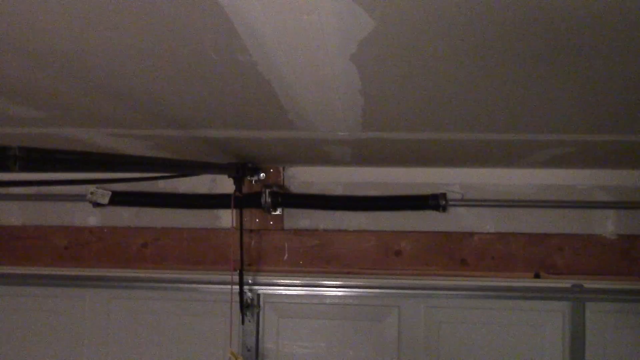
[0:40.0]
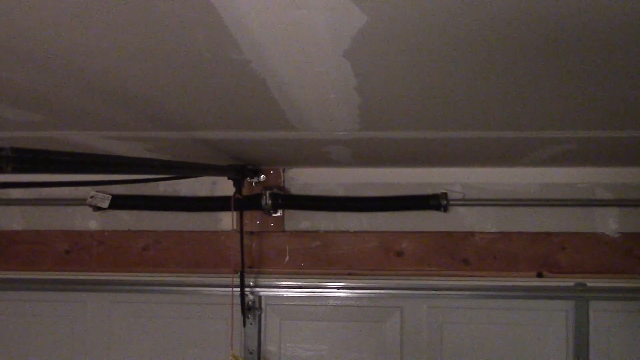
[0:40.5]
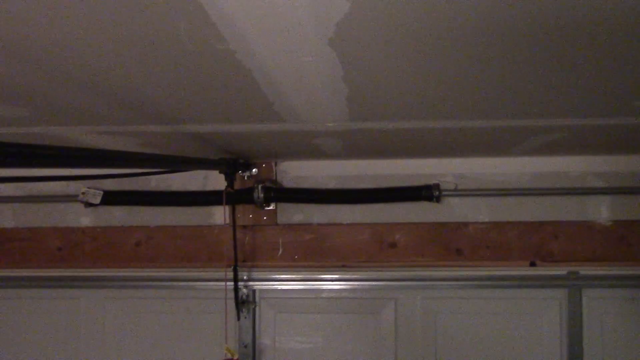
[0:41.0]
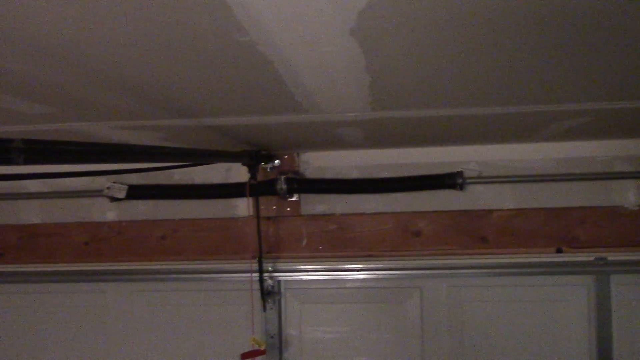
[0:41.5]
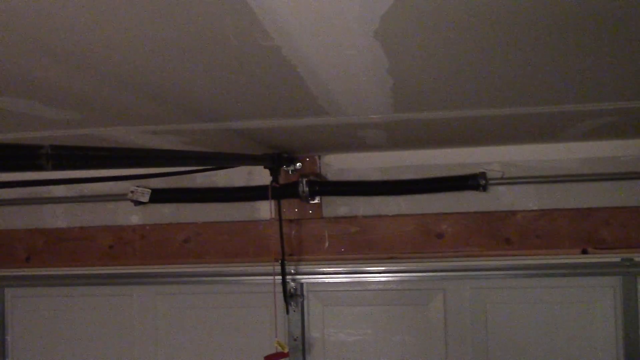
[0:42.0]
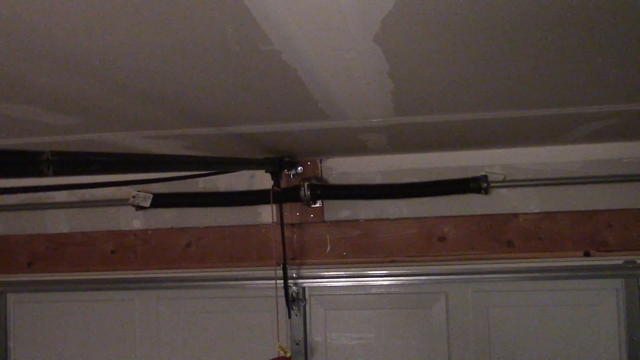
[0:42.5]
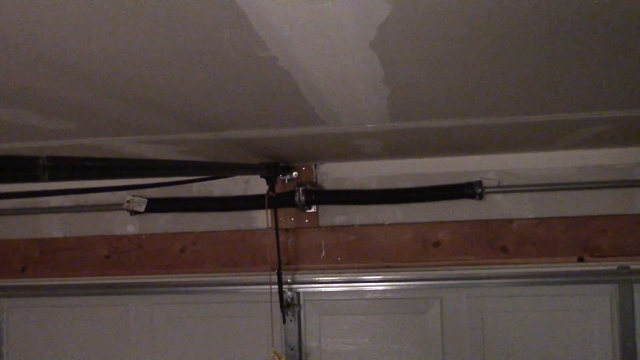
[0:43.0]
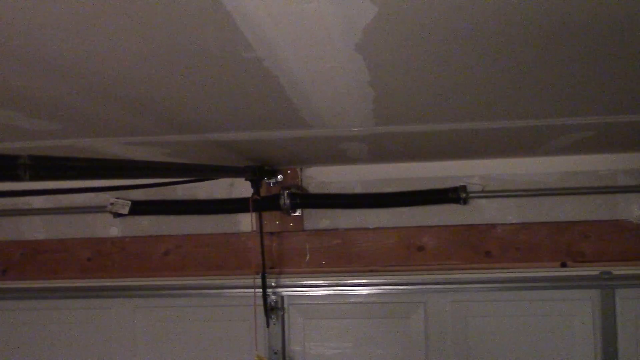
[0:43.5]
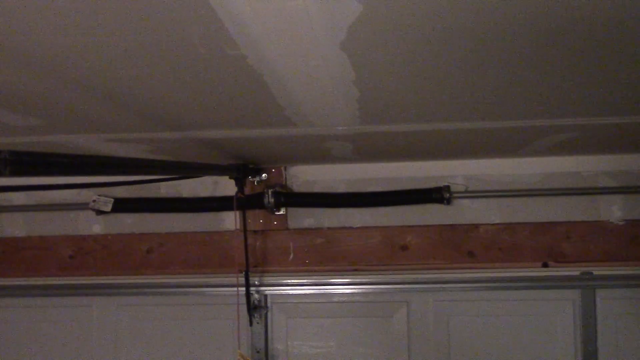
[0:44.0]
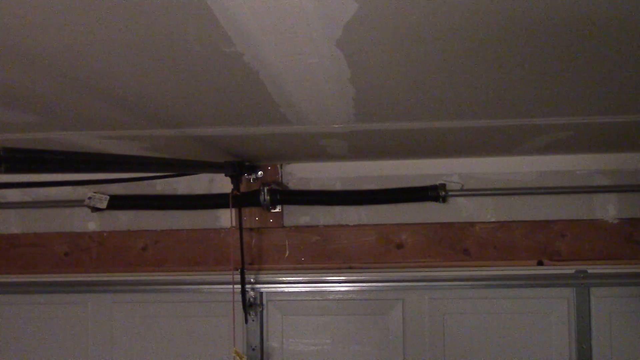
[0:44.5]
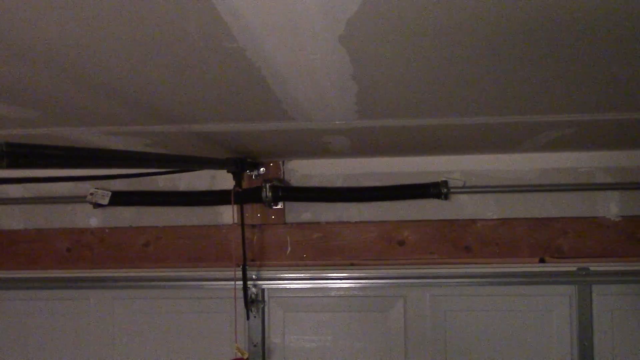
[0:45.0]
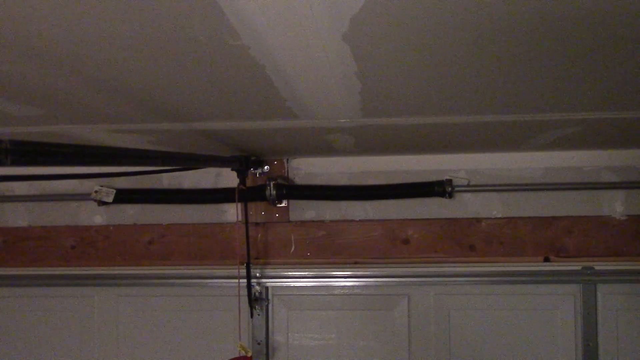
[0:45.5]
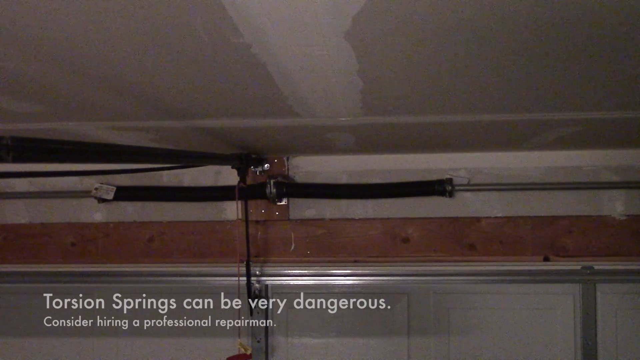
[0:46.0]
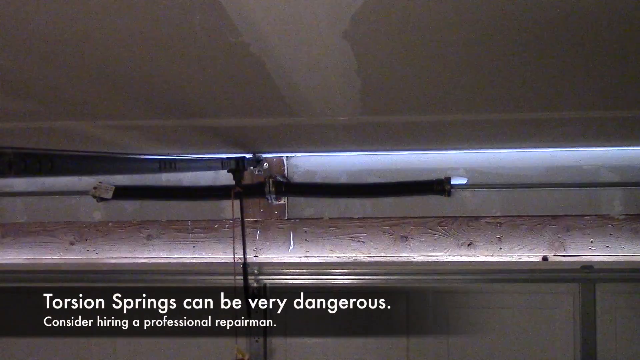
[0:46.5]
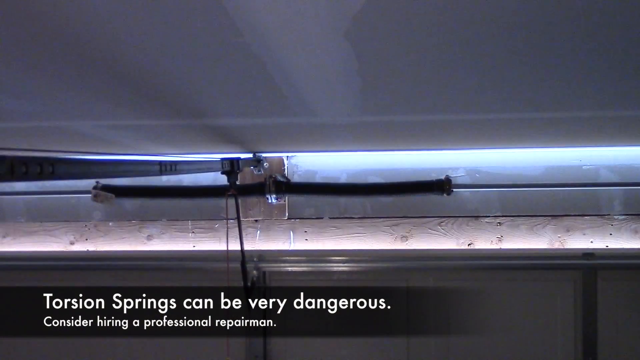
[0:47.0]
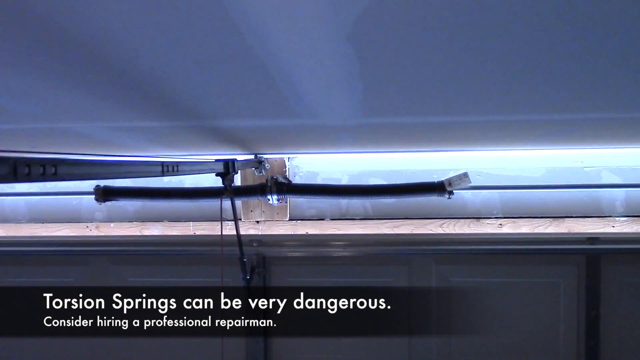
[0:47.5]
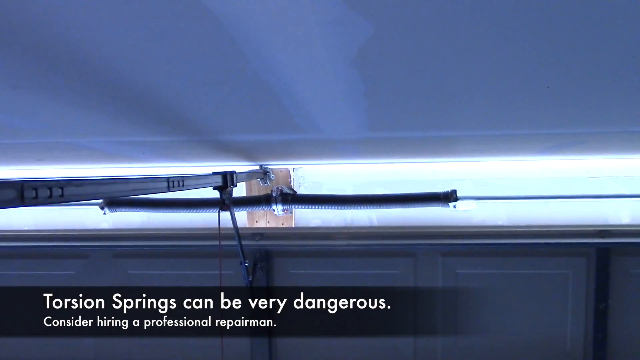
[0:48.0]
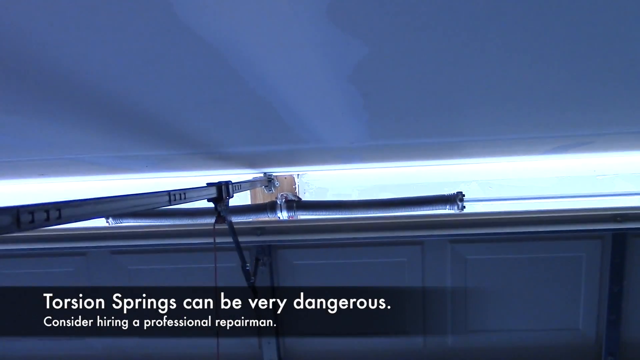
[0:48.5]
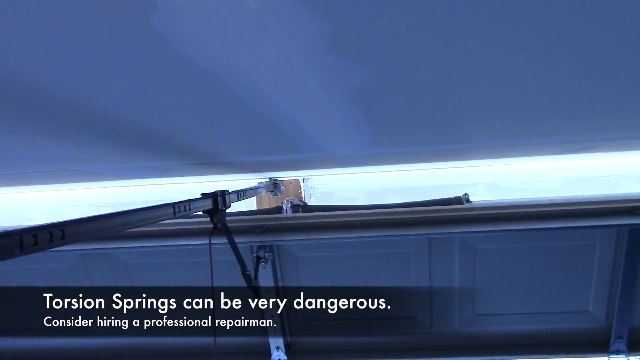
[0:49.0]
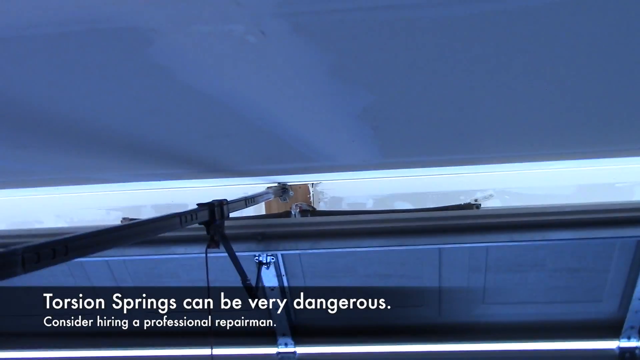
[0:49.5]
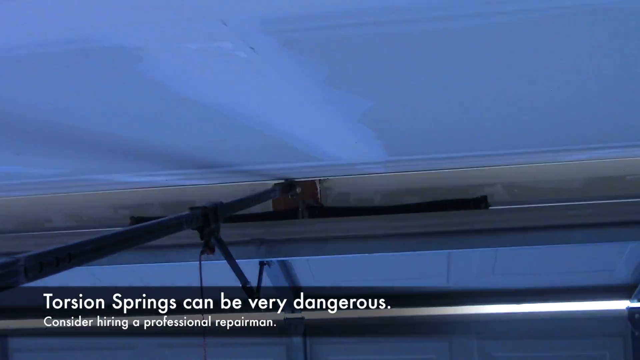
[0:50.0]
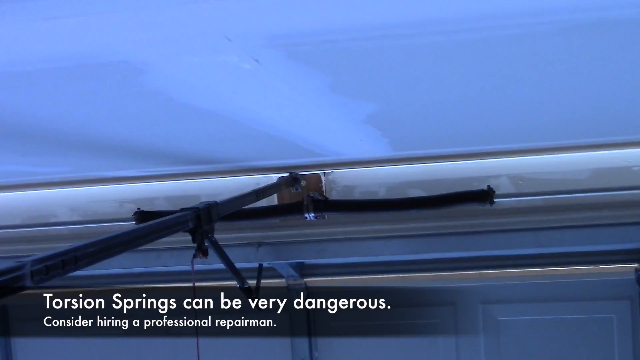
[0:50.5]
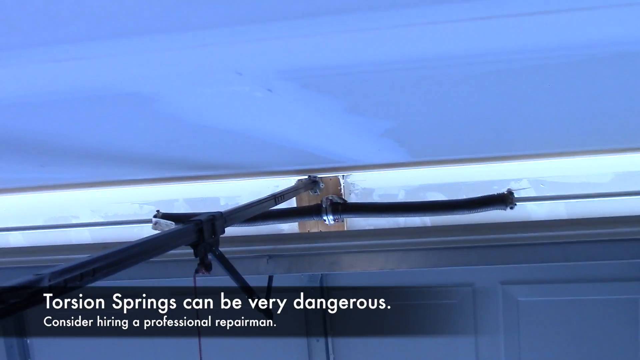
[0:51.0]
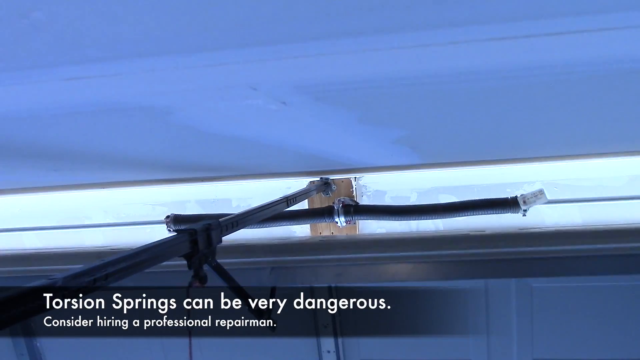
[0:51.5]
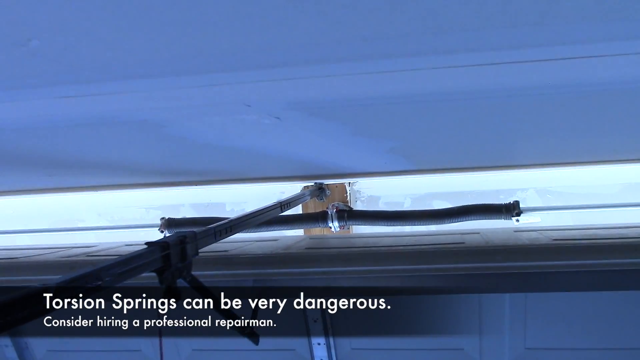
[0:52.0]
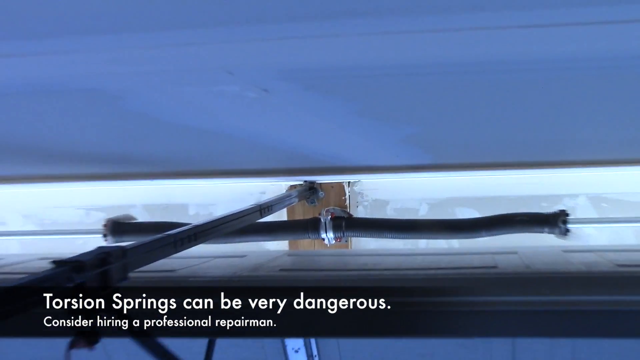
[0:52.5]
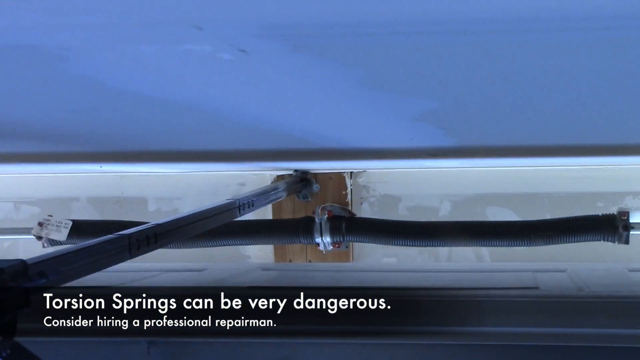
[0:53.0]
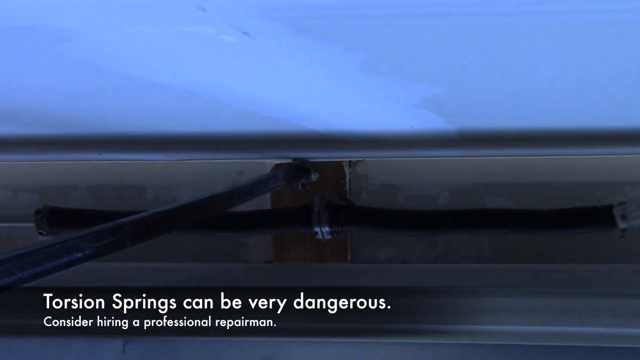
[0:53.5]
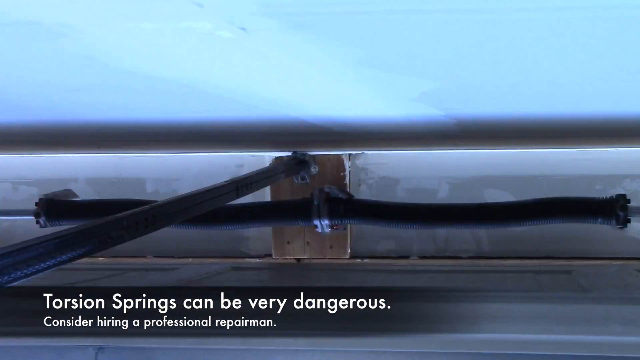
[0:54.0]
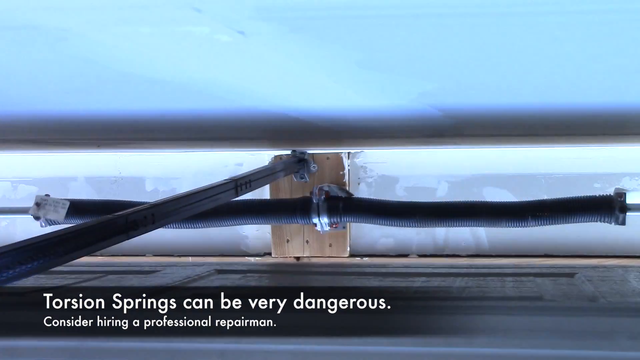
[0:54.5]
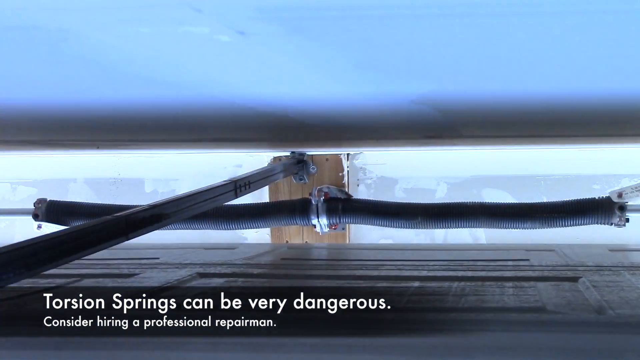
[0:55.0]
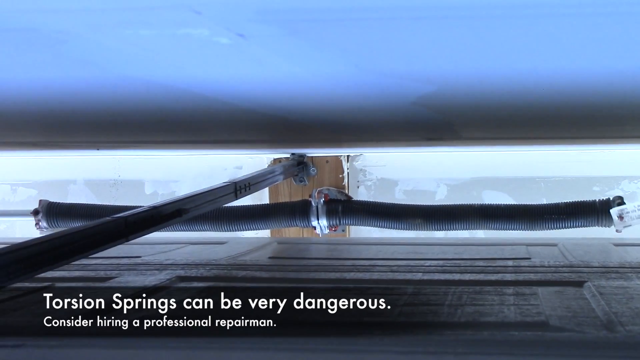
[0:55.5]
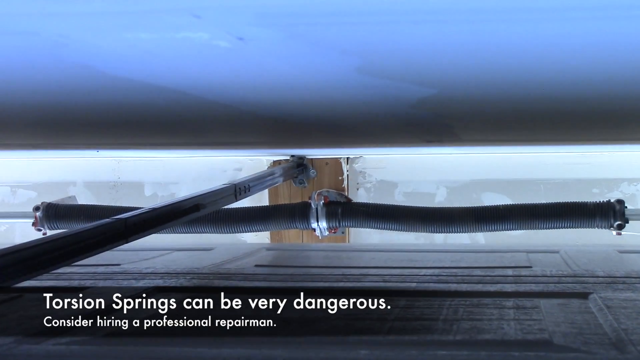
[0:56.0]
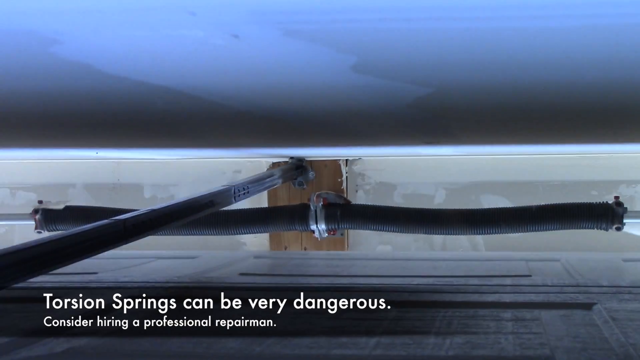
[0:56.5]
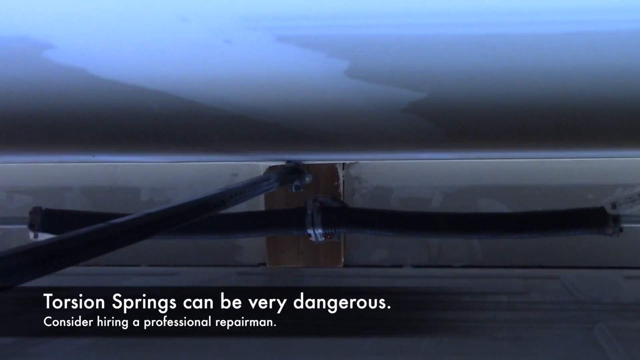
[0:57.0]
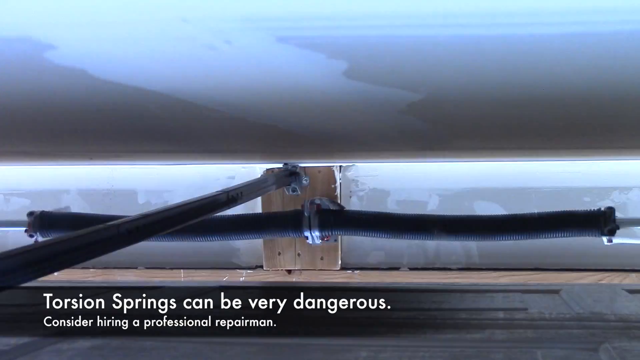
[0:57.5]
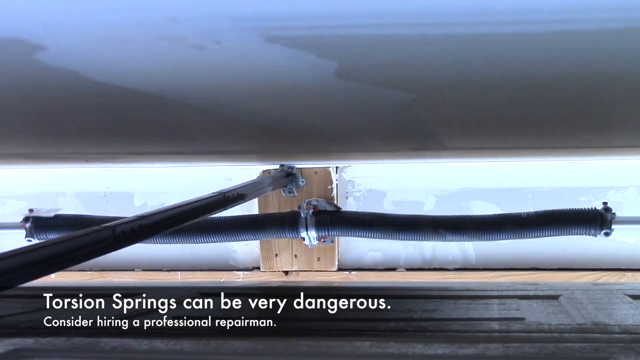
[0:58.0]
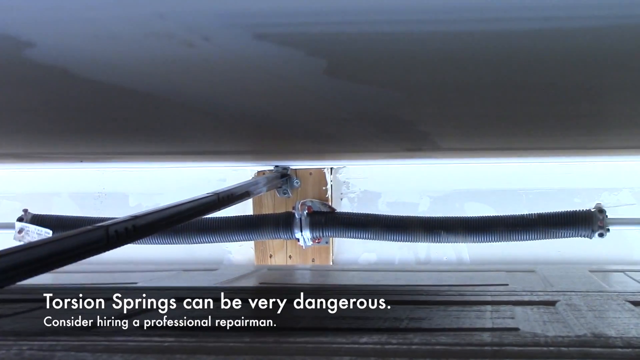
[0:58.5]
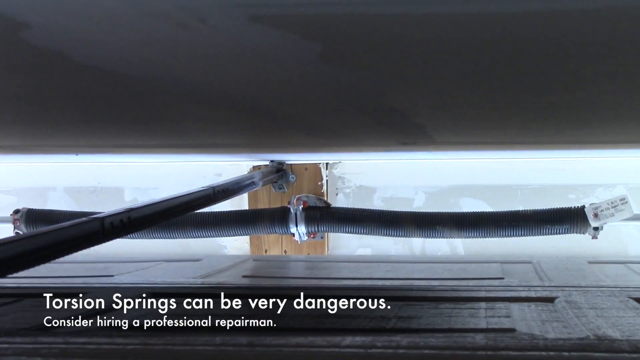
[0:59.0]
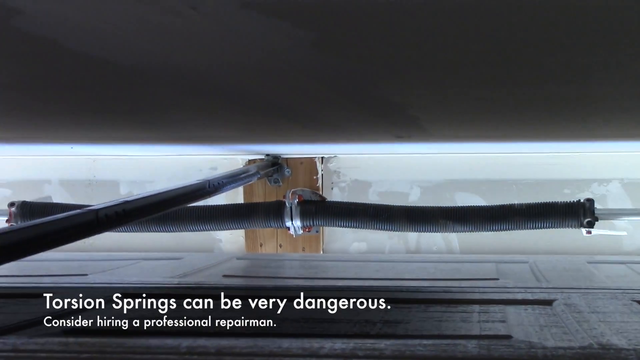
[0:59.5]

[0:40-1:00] The camera remains on the garage door opener. The garage looks very unfinished: there is paint on the ceiling, but it does not cover the whole ceiling. A wood-colored wood board is on the top of the garage door. The garage door is white and looks to be a single-car door. The camera moves as if someone is holding it rather than mounted. The garage door then starts to open, going up toward the ceiling and coming toward the camera, its top moving along the ceiling. Text appears on the screen reading "torsion springs can be very dangerous," and under it "consider hiring a professional repairman." The camera then kind of zooms in on the springs, which rotate to bring the garage door up and open it.